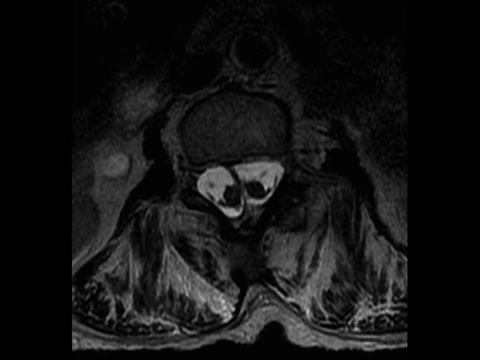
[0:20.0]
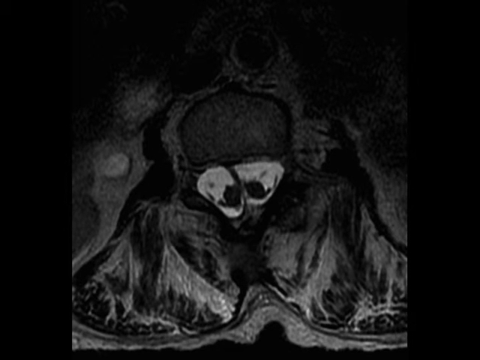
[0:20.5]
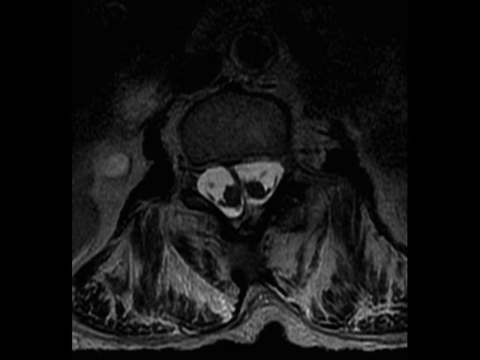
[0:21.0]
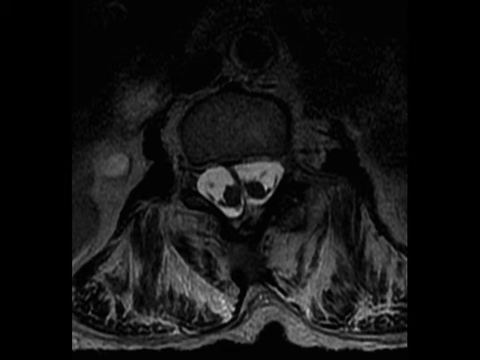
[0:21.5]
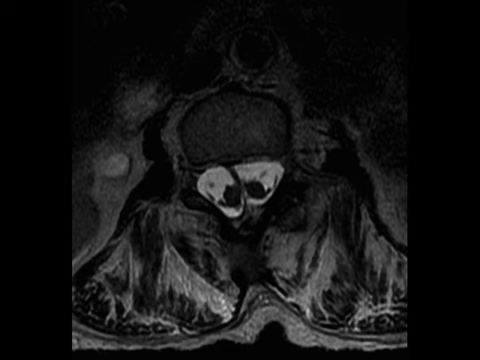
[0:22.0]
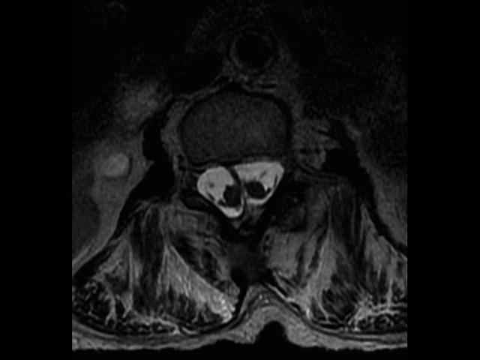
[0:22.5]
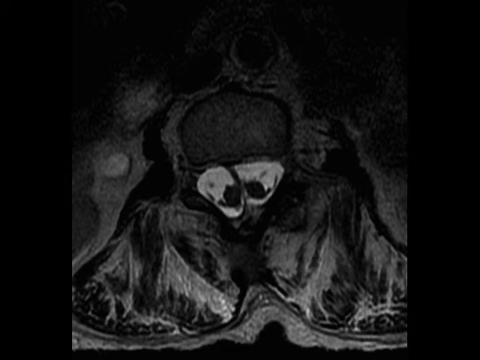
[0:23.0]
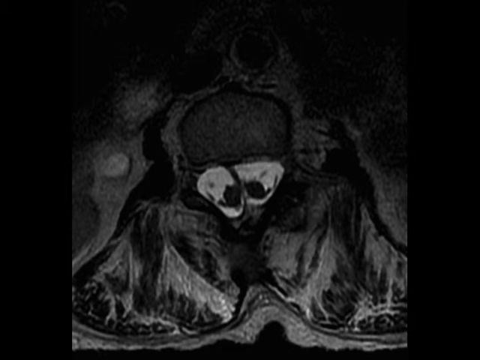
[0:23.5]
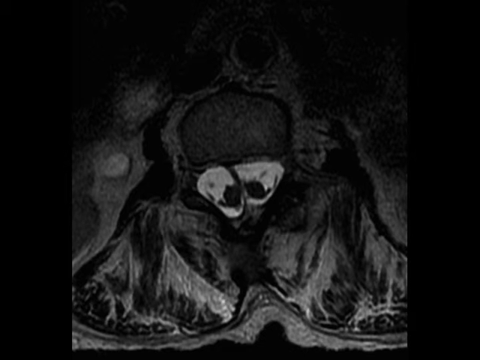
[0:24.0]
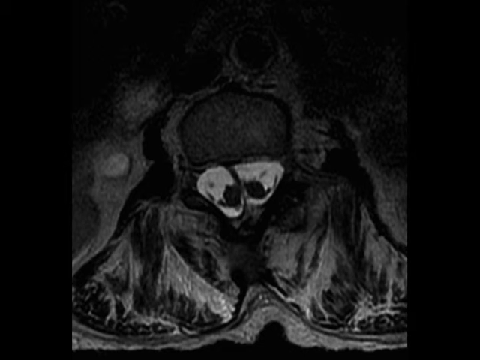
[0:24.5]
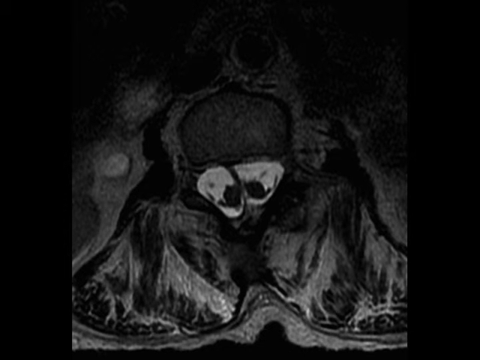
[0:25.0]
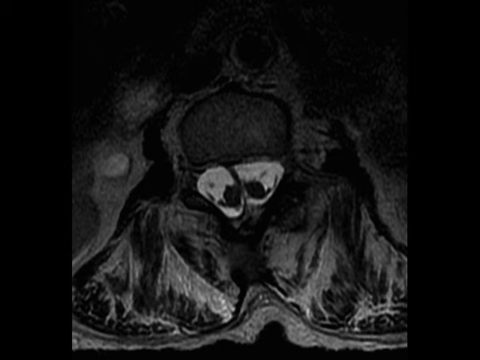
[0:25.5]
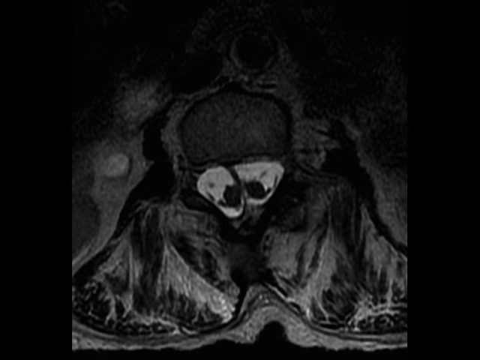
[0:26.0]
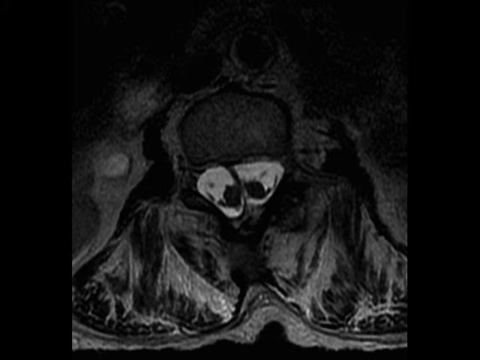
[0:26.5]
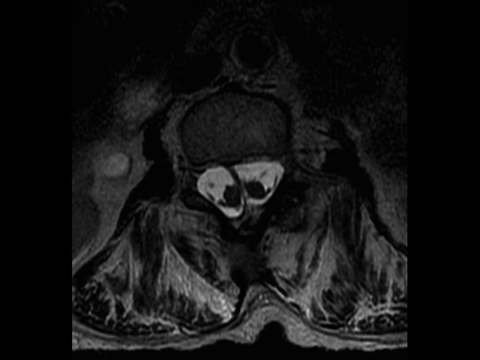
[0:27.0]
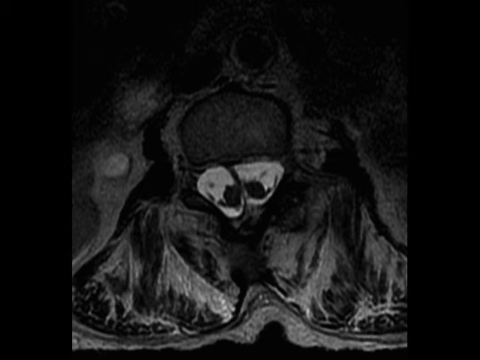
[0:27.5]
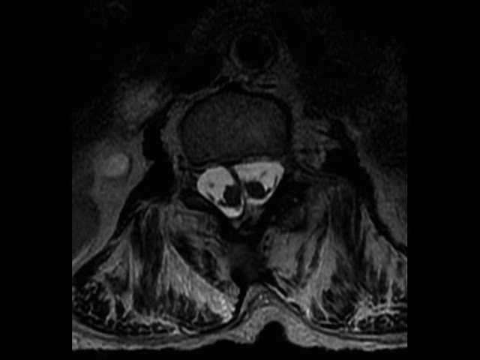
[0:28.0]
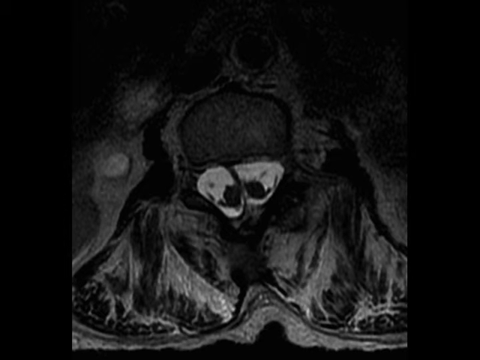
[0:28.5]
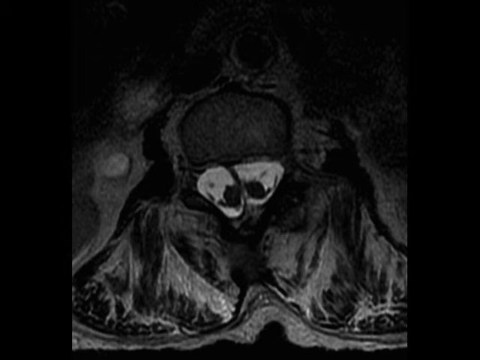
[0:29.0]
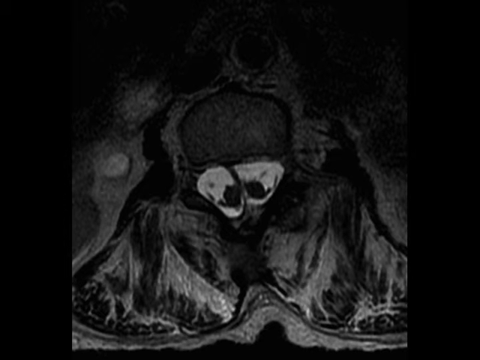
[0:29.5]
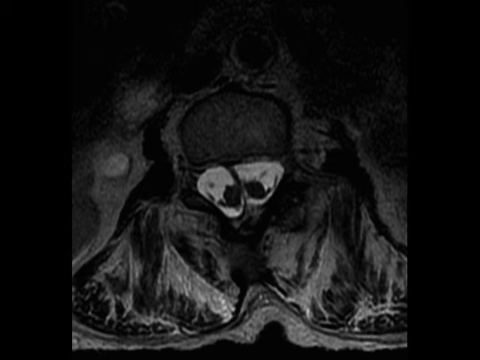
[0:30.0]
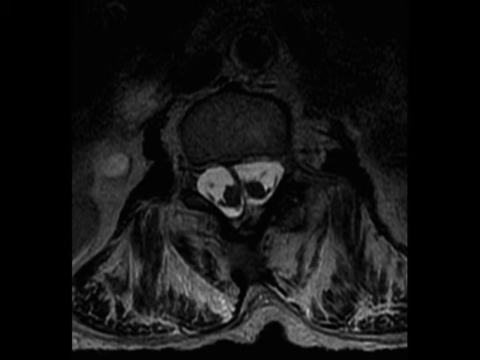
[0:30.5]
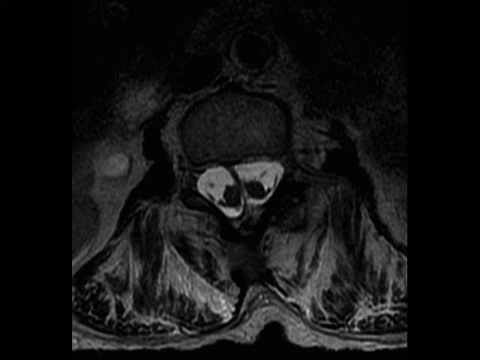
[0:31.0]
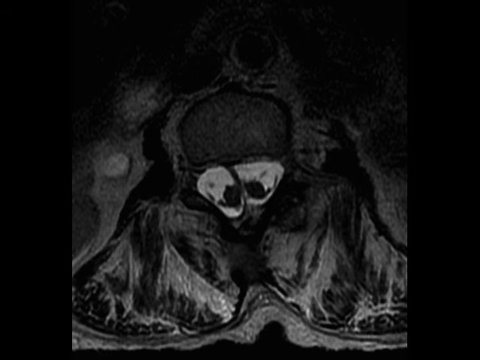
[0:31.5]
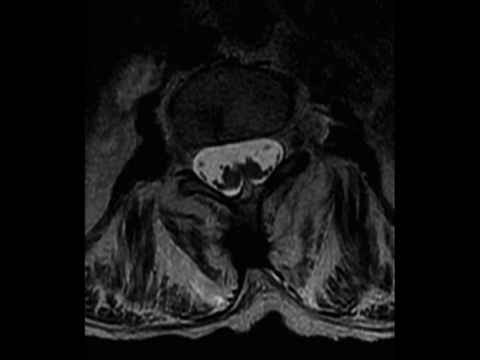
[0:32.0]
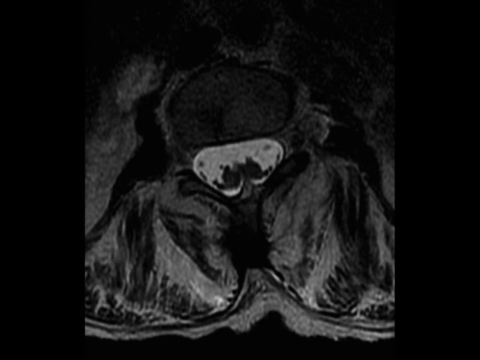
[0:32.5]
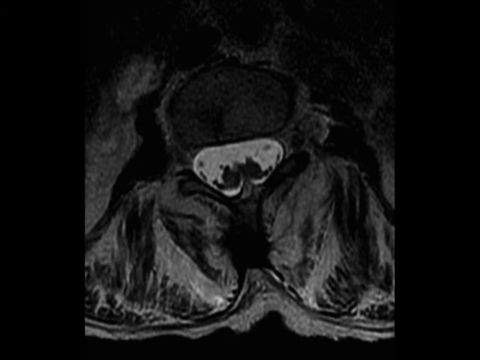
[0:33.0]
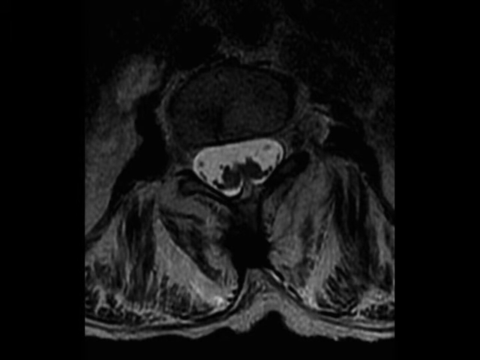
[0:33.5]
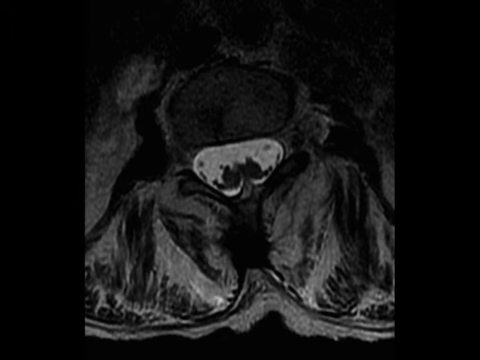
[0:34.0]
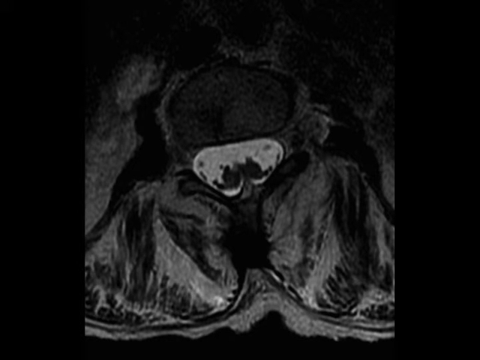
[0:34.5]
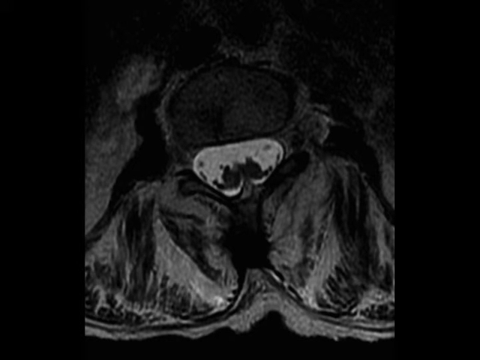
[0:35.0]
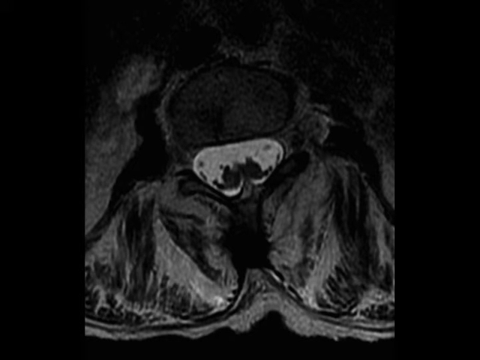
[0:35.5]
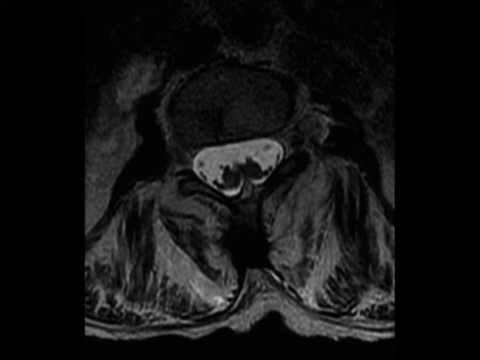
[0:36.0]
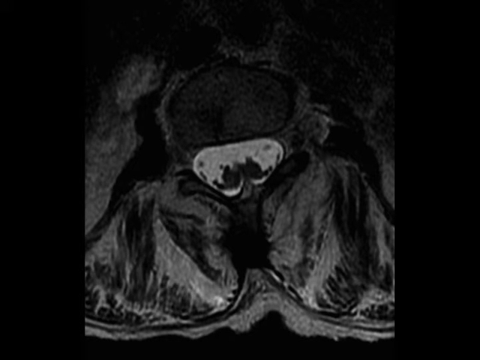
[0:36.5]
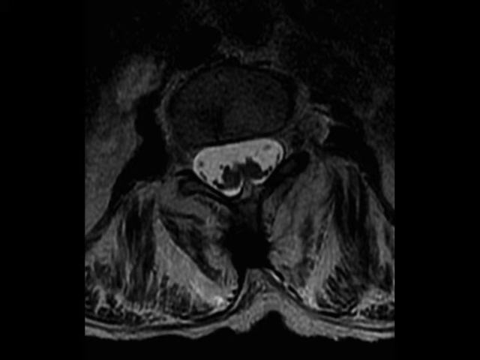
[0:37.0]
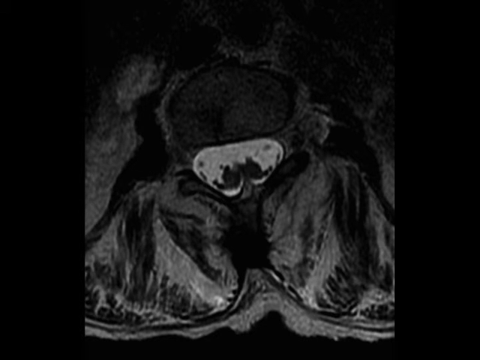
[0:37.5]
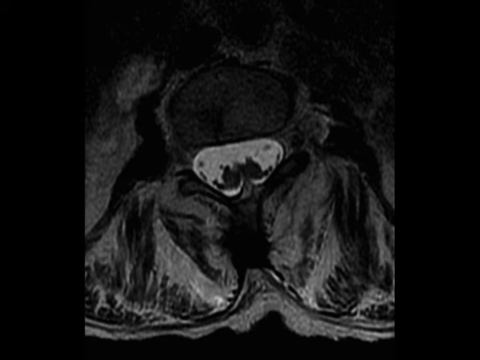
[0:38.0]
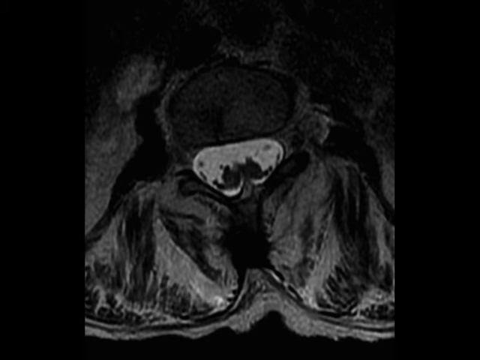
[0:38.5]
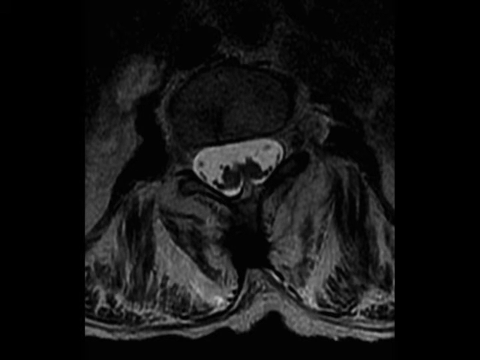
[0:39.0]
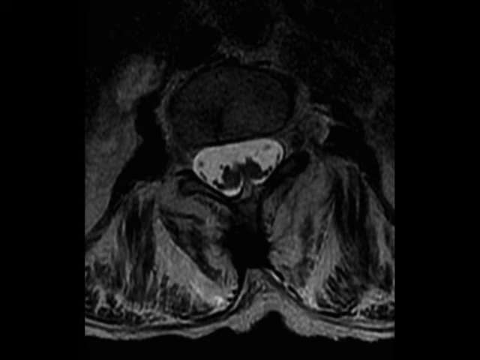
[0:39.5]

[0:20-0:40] A black and white x-ray image of a spinal column shows the front and back of the person's body, while the left and right sides are cut off at the sides of the image. The x-ray is taken from above the body, looking down toward the spinal column, which appears whiter than the rest of the image. There is no movement or animation, except toward the end, when the view zooms in a little on the spinal column and then zooms back out to the larger image.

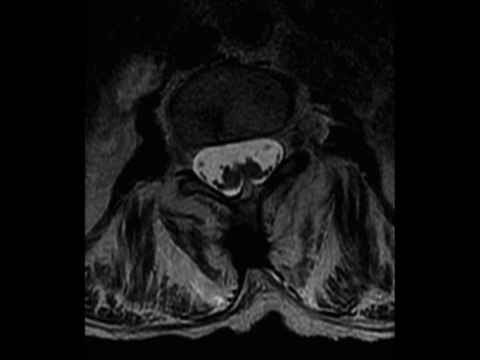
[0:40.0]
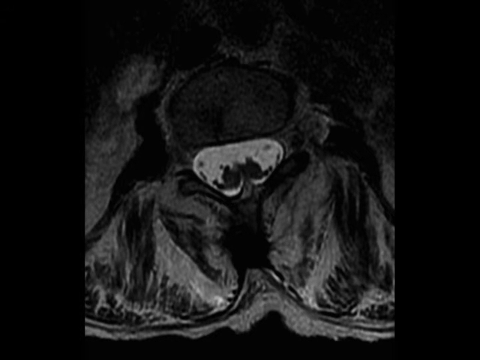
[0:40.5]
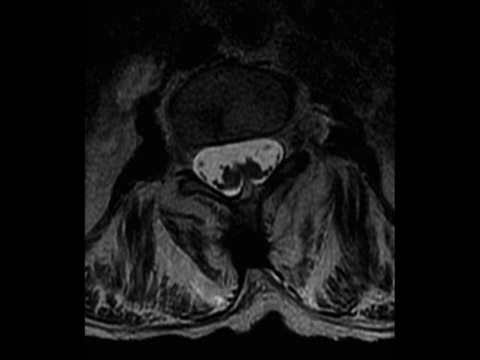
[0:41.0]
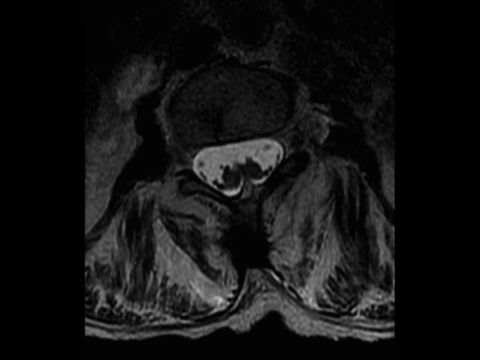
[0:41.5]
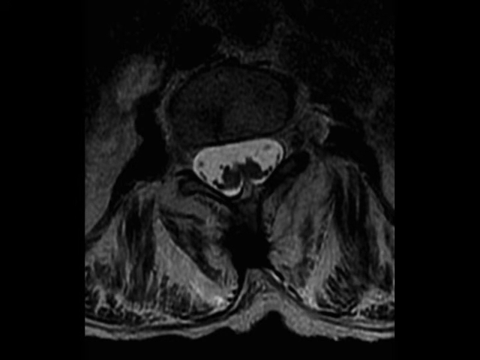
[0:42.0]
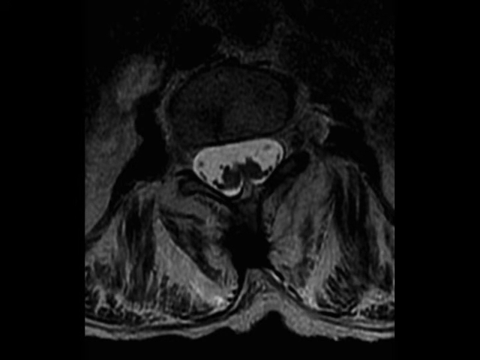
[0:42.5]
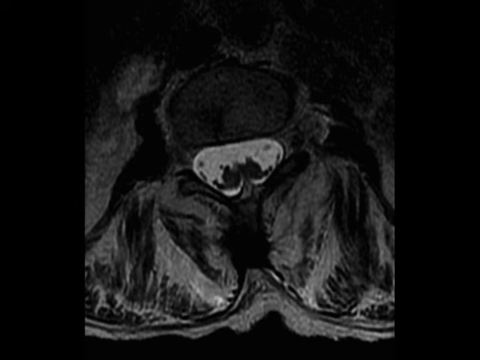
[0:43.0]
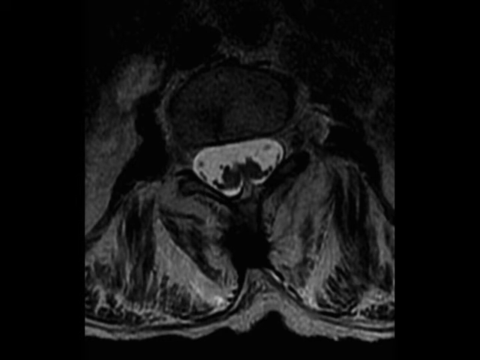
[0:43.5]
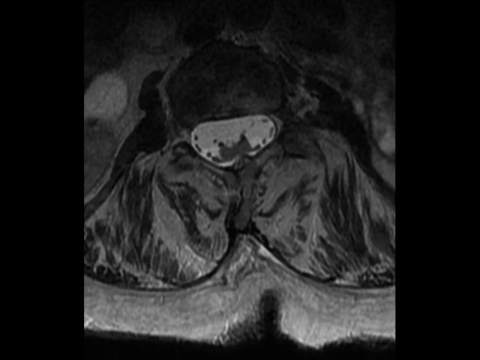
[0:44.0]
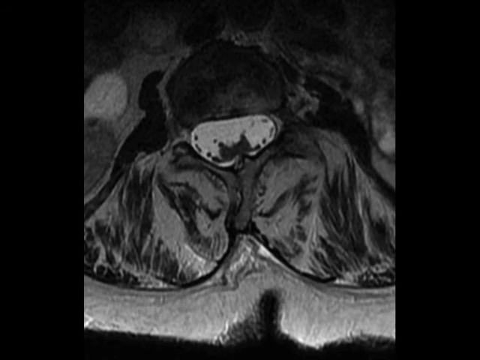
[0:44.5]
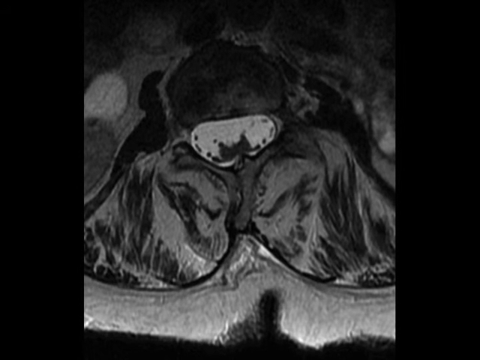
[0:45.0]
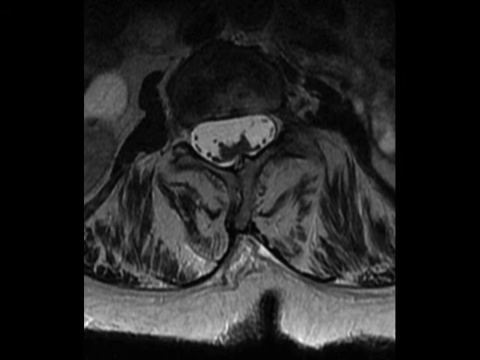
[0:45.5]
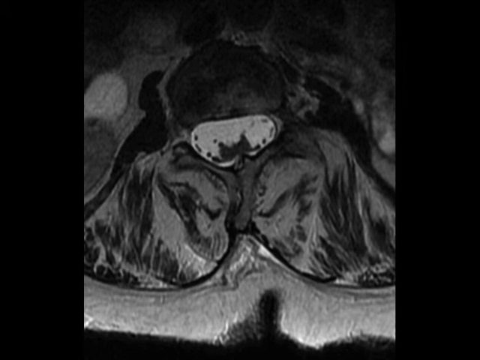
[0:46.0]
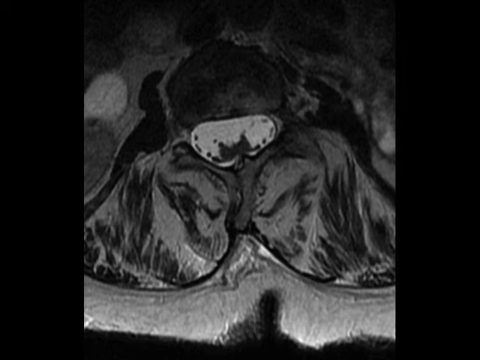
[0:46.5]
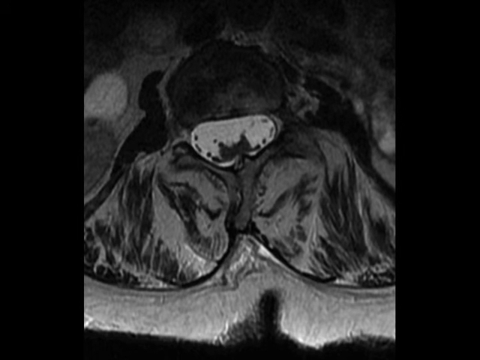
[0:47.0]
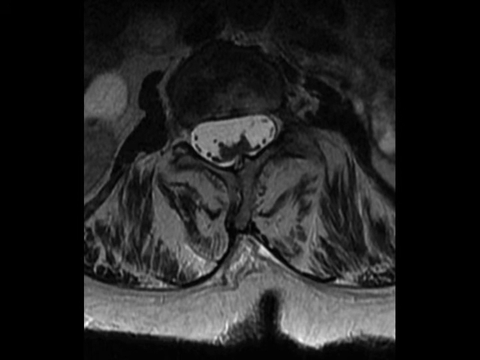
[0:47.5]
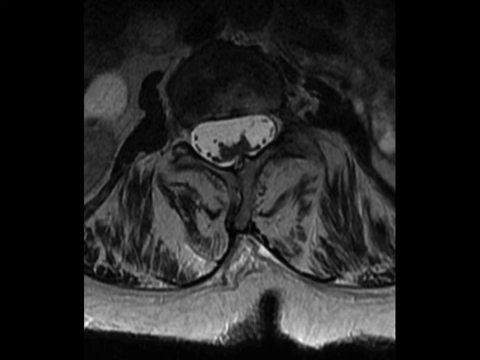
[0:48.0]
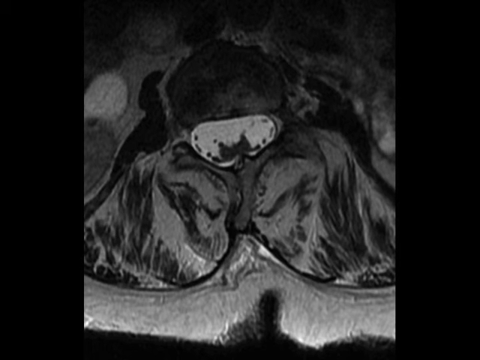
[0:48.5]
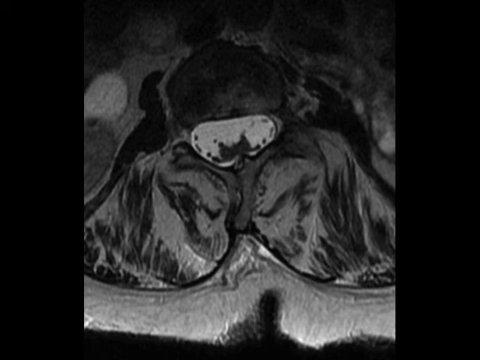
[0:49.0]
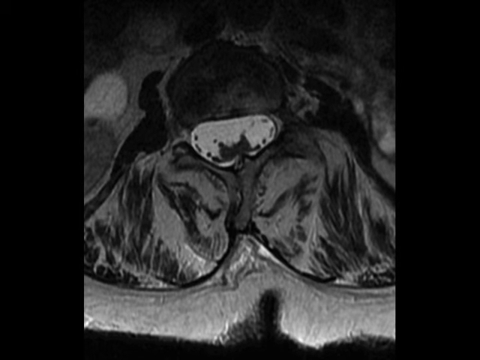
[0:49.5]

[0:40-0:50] A black and white x-ray taken from above a person's body has its center focus on the spinal column, and the person's back and front are visible at the back and front of the body. The left and right sides of the body are cut off in the image. The spinal column is white, in contrast to the grayer colors of the rest of the x-ray. The image is completely still, except toward the end, when the view zooms in closer toward the spinal column and then zooms out again.